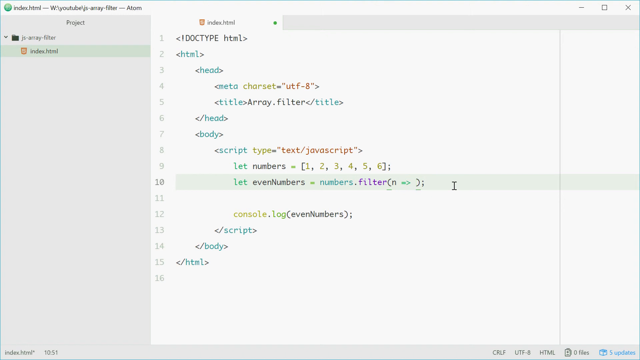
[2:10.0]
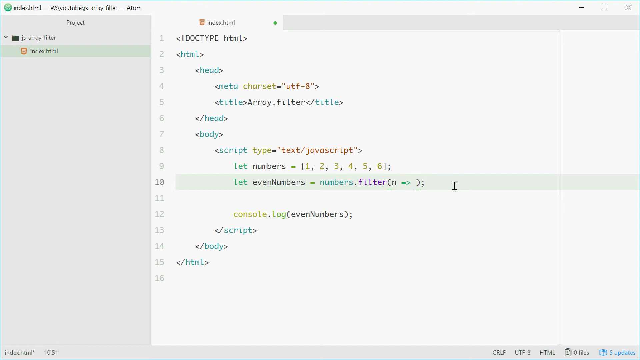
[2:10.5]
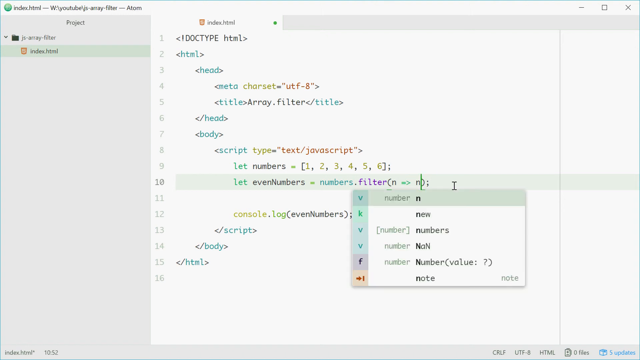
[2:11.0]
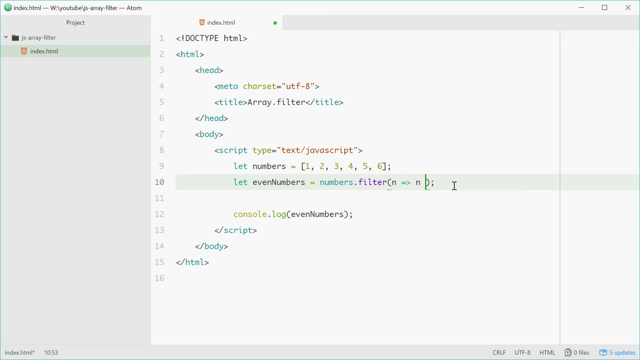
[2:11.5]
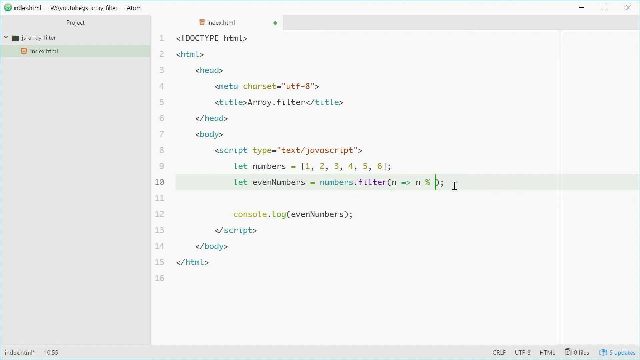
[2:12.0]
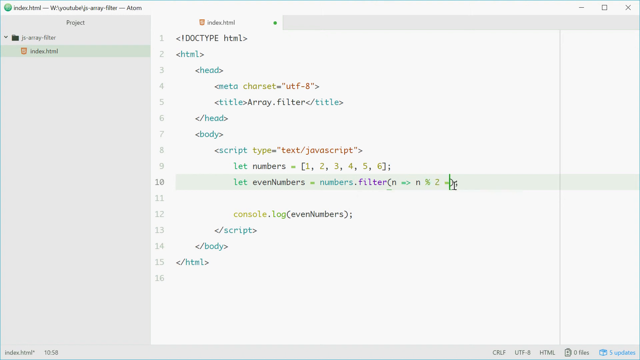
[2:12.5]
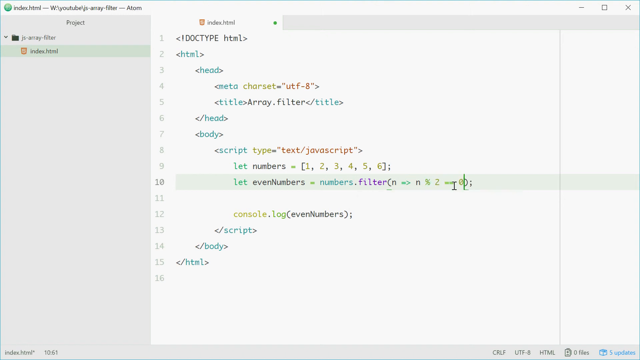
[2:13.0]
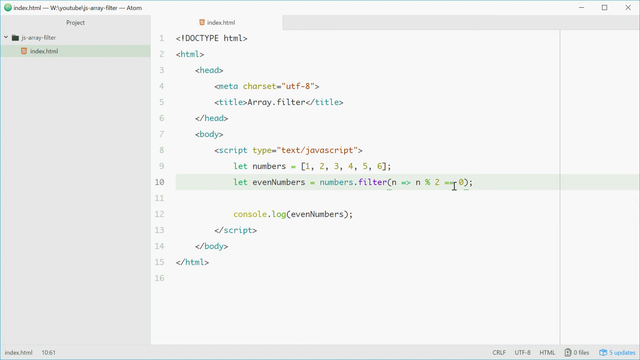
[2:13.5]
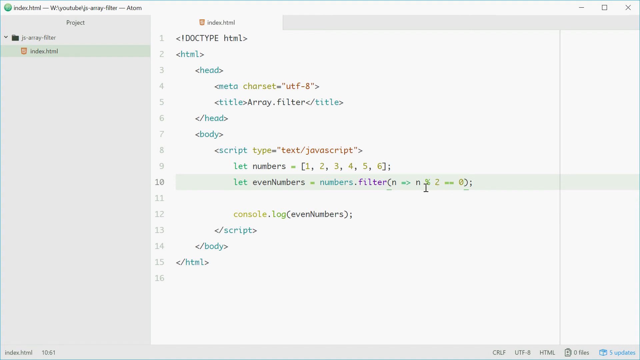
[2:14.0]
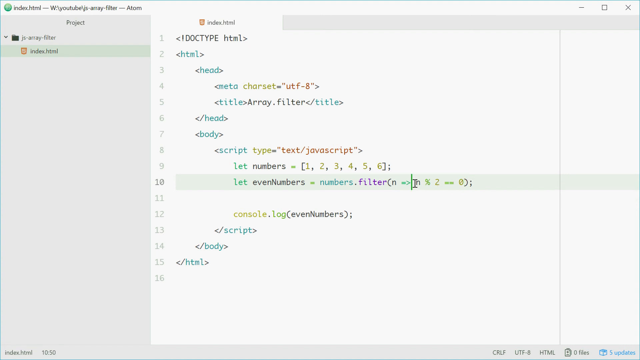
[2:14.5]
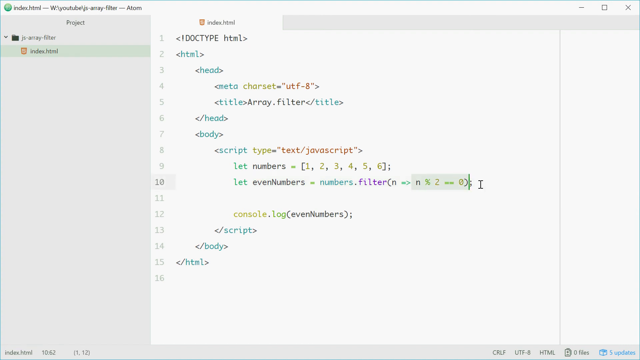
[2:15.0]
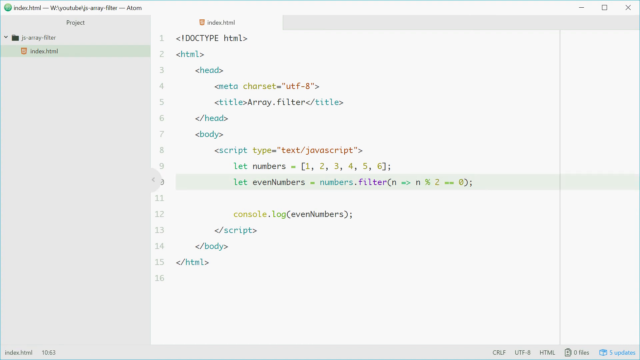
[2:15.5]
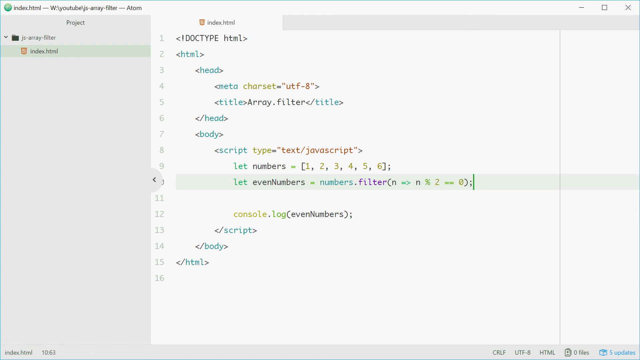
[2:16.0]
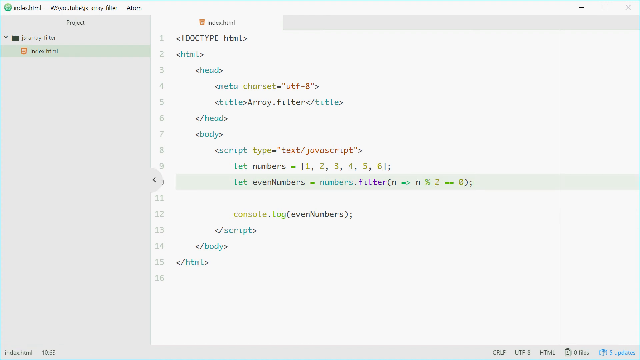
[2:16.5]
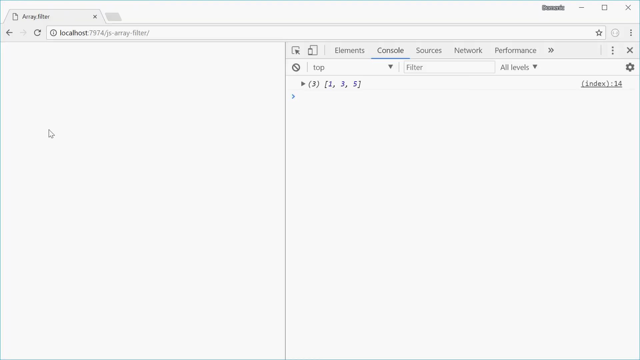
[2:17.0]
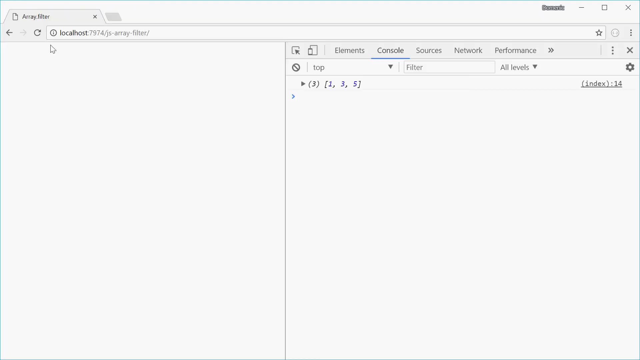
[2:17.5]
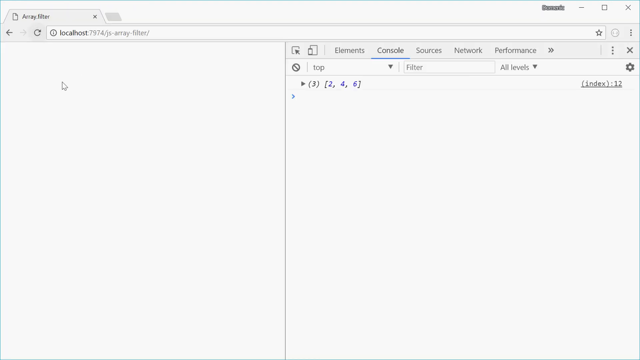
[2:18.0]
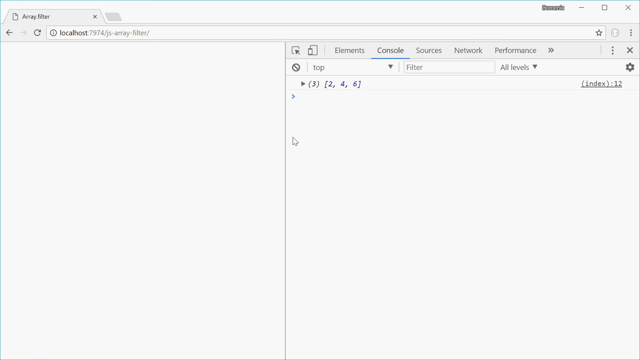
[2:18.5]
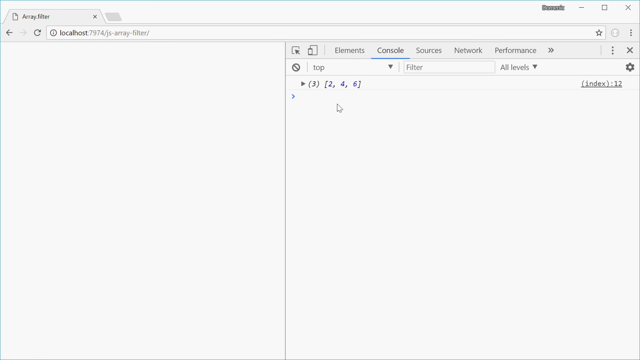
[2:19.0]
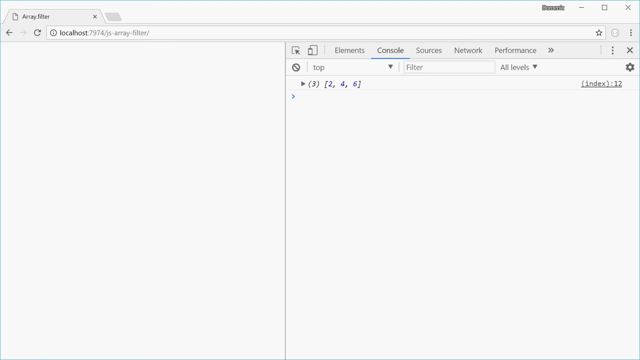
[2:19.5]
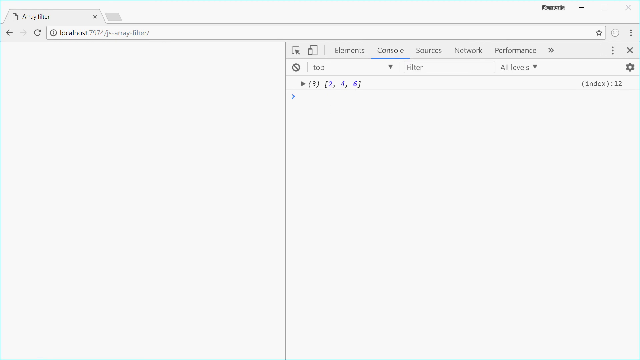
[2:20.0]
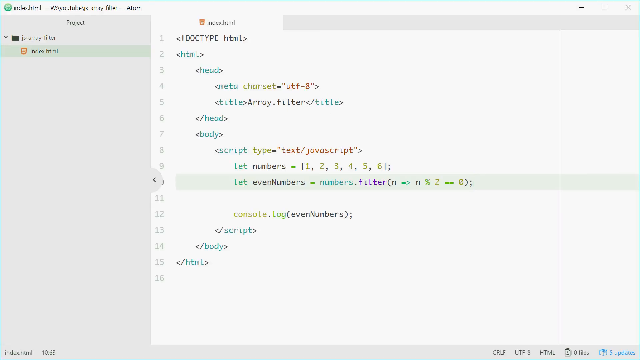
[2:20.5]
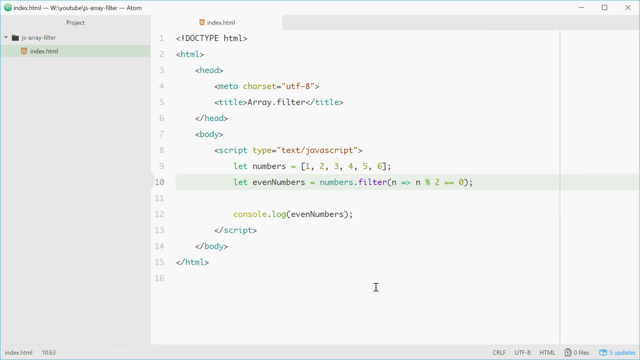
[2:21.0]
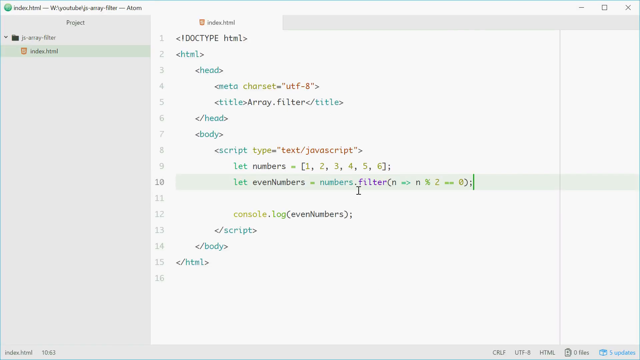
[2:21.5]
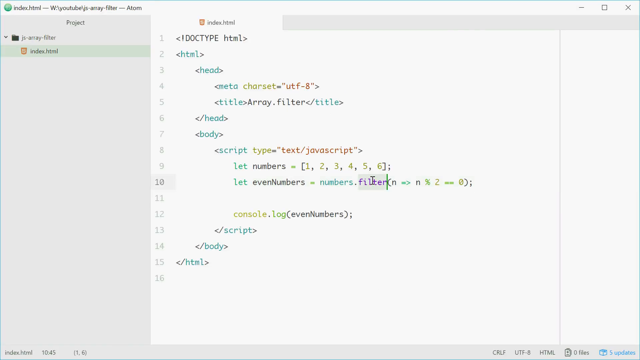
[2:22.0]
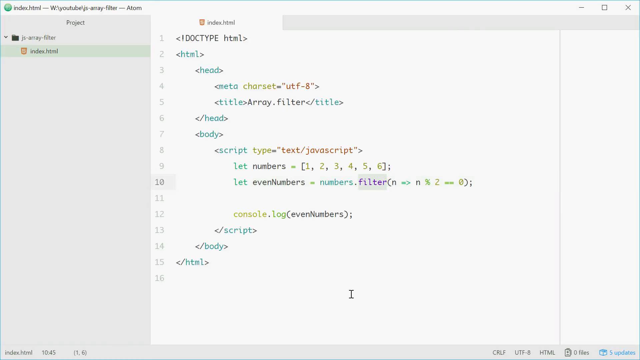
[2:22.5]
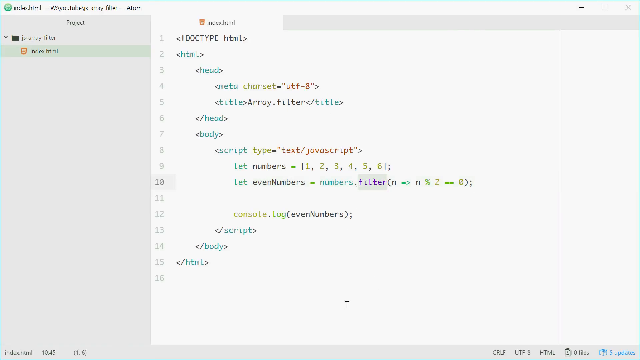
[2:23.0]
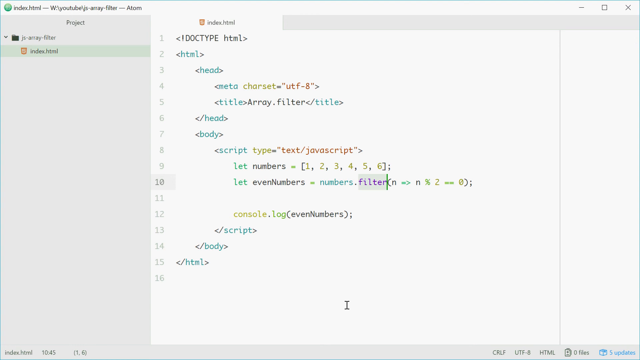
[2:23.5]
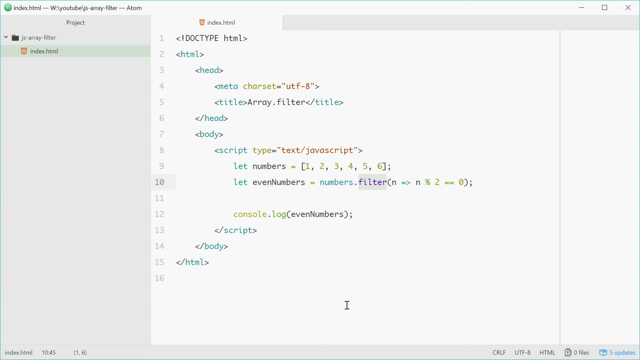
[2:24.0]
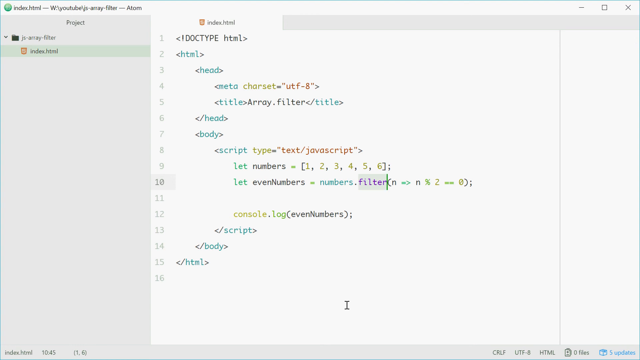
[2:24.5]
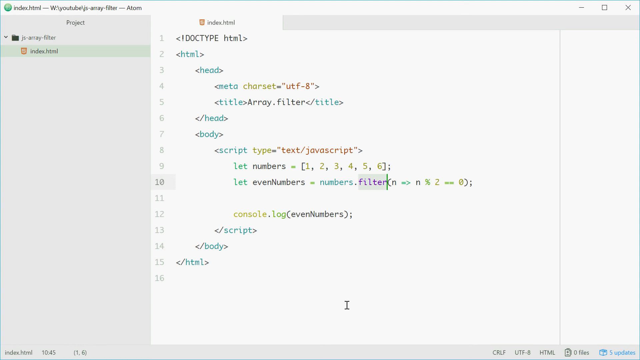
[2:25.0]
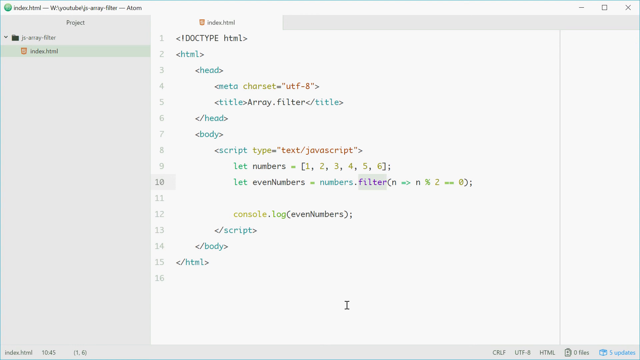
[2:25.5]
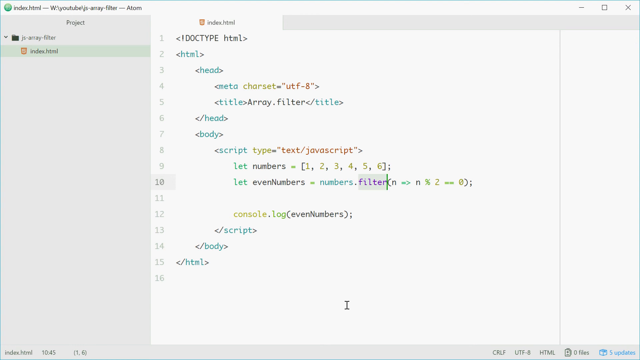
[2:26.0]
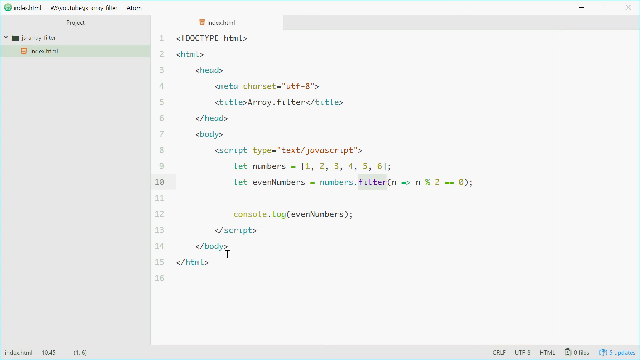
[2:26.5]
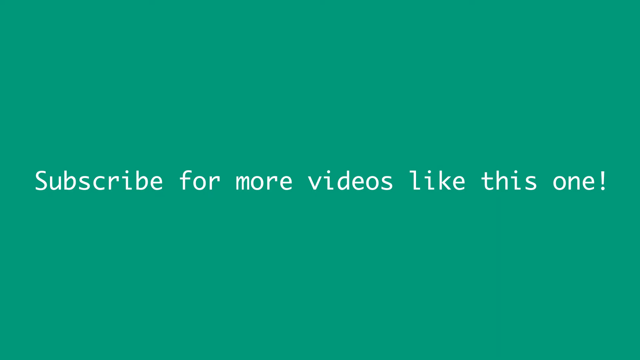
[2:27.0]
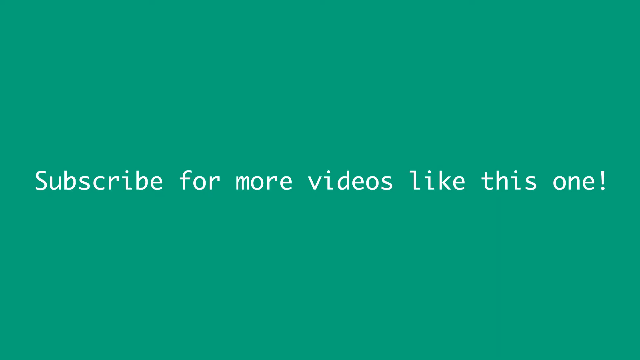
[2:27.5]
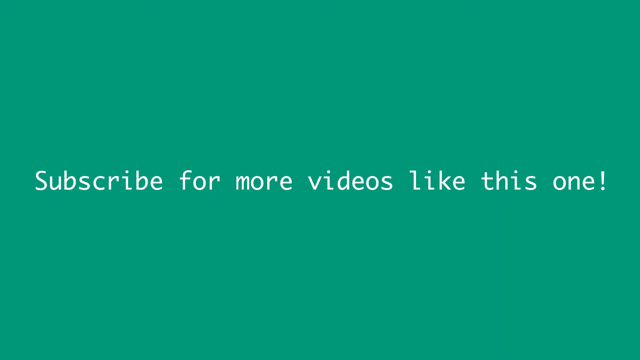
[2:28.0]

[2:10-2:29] The person continues editing line 10, which now reads "numbers.filter(n => n % 2 == 0);". The array.filter page is opened, and the inspect panel shows 3 in round brackets followed by 2, 4, 6 in square brackets. The person returns to the script and highlights the word "filter". At the end the screen turns fully green with the words "subscribe for more videos like this one" in white, in a sort of typewriter font; it stays on this screen without fading. In the script software, about one sixth of the way in from the right side, a vertical grey line kind of separates the coding page into two parts.